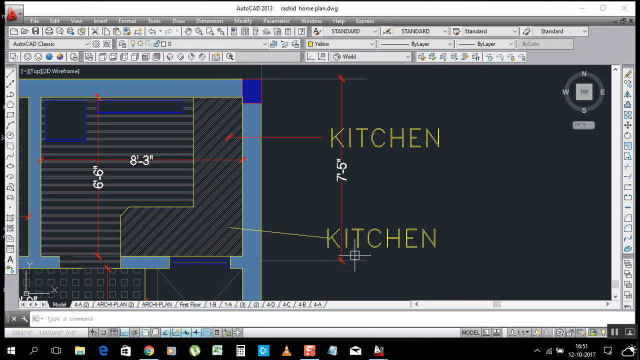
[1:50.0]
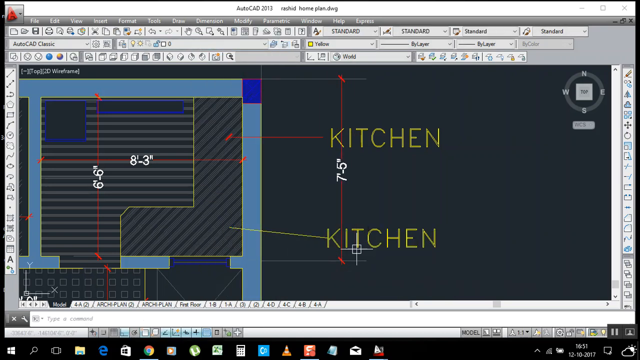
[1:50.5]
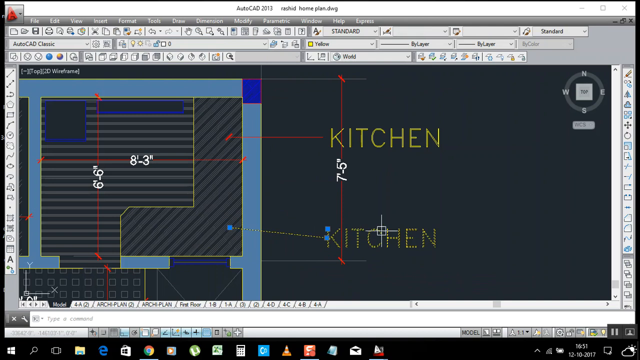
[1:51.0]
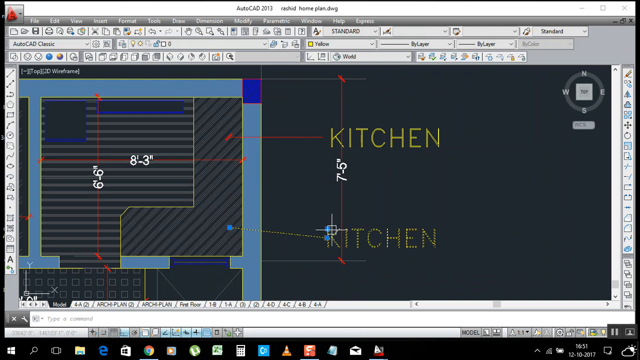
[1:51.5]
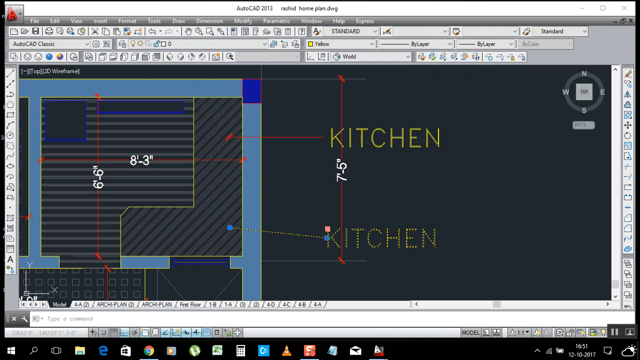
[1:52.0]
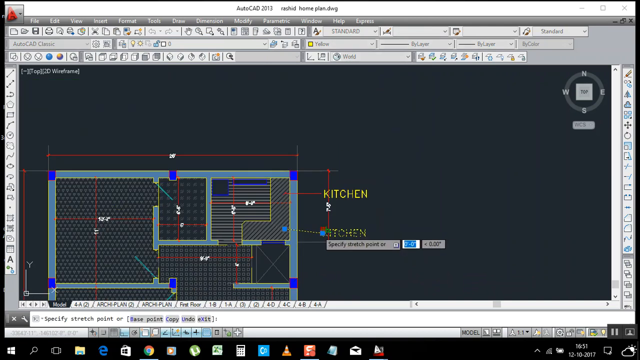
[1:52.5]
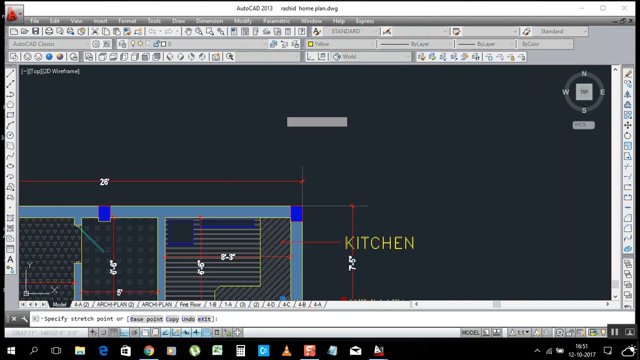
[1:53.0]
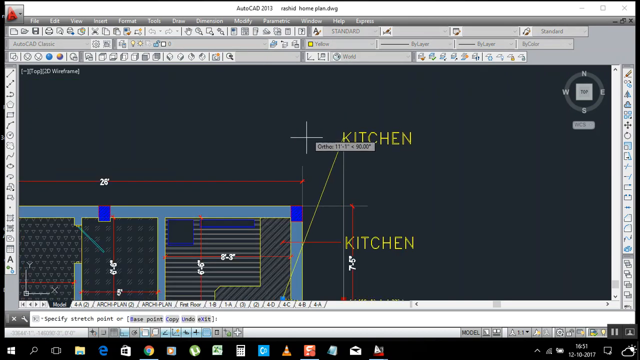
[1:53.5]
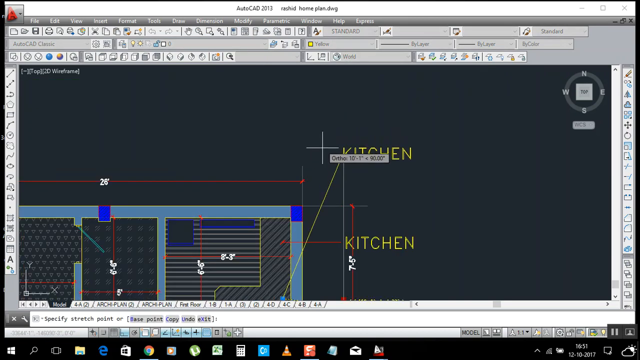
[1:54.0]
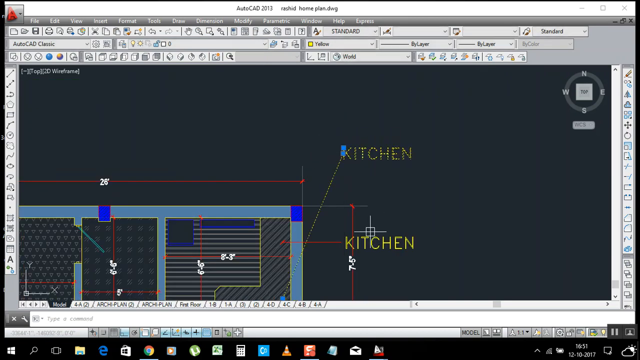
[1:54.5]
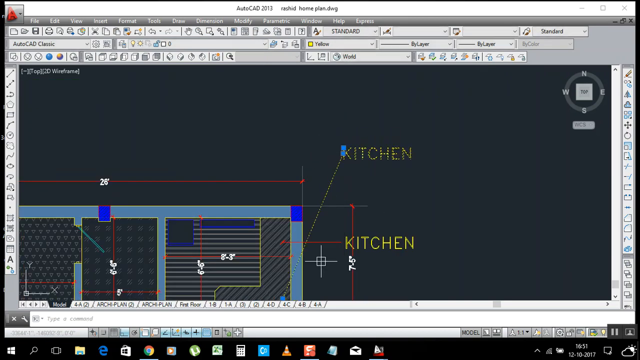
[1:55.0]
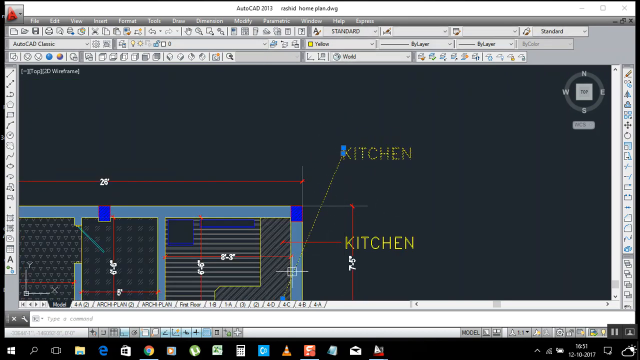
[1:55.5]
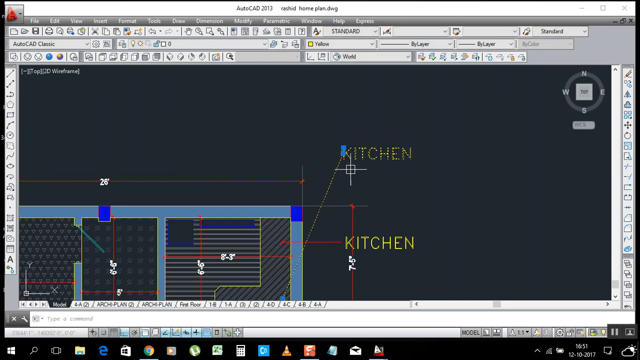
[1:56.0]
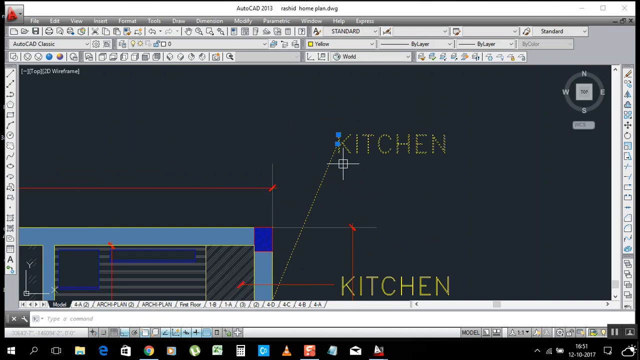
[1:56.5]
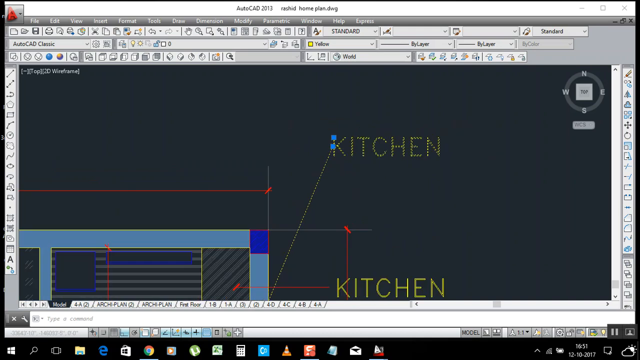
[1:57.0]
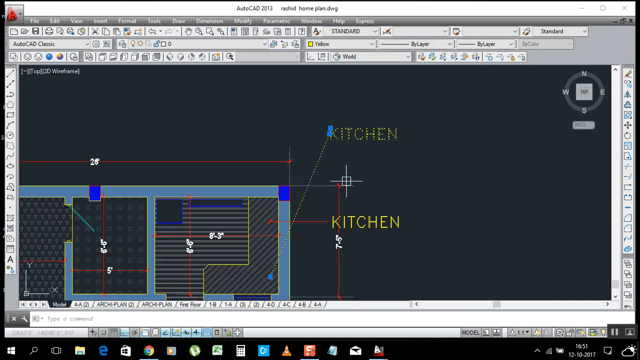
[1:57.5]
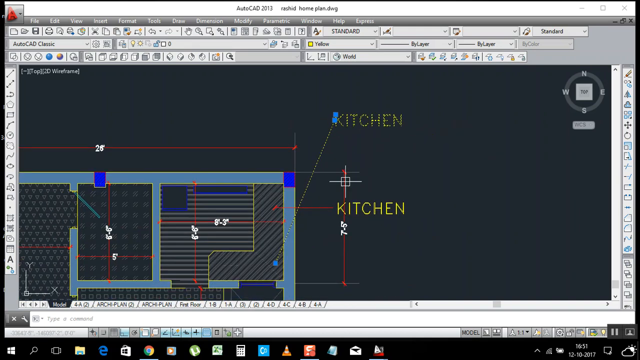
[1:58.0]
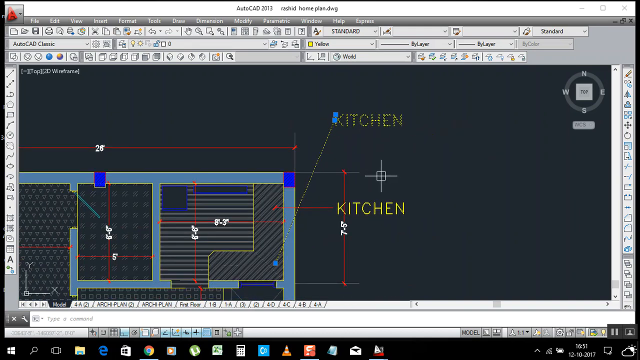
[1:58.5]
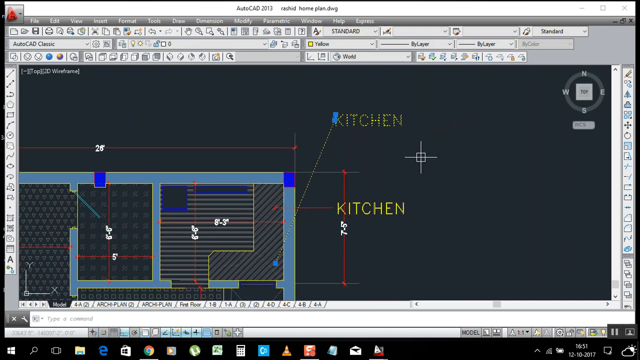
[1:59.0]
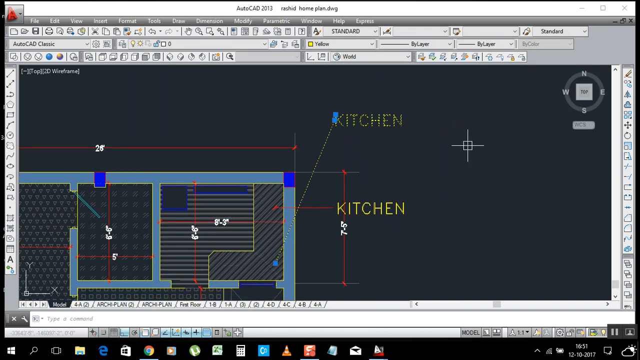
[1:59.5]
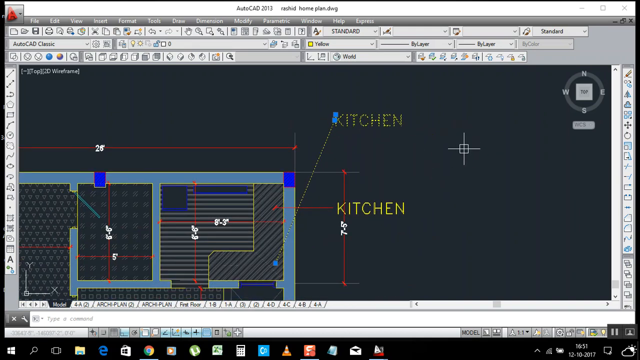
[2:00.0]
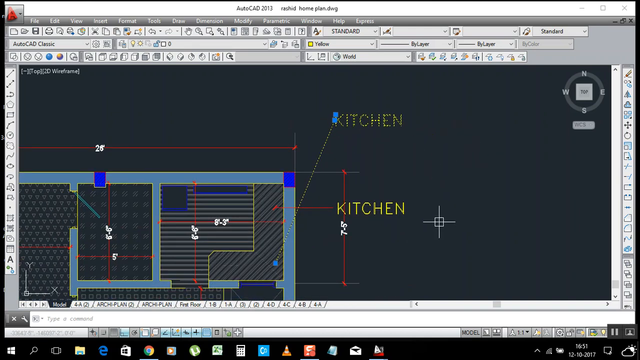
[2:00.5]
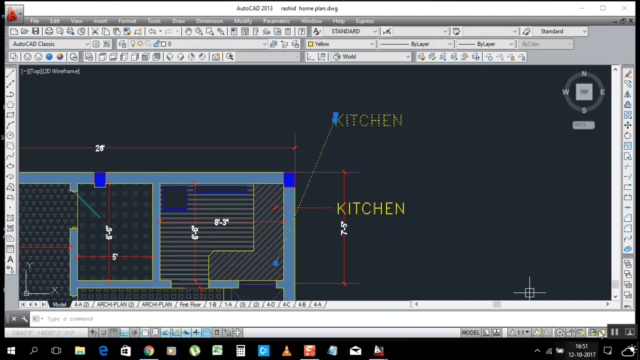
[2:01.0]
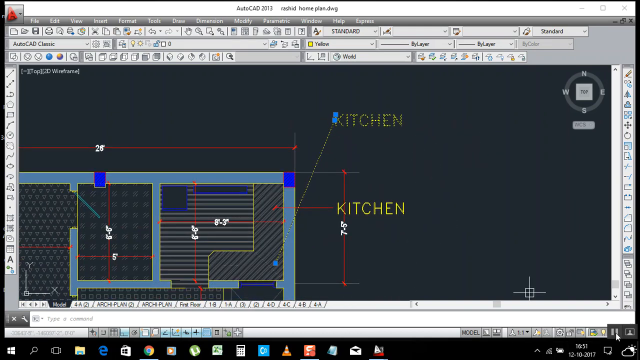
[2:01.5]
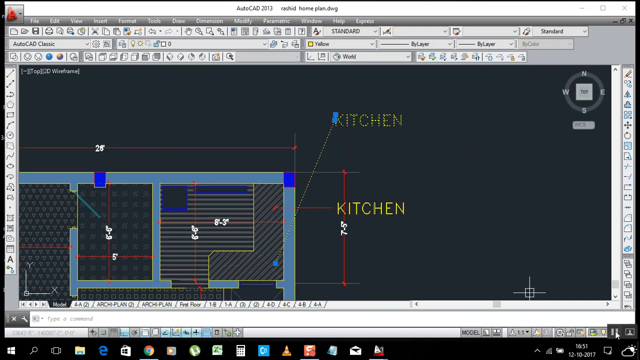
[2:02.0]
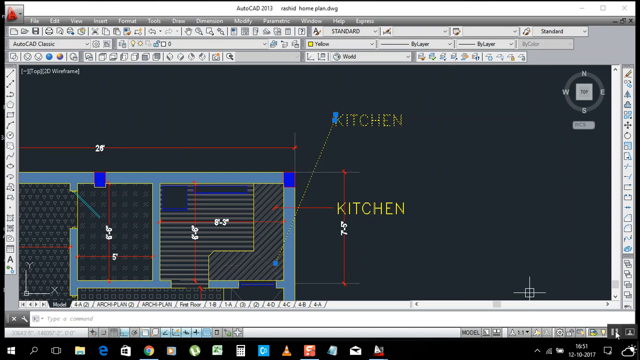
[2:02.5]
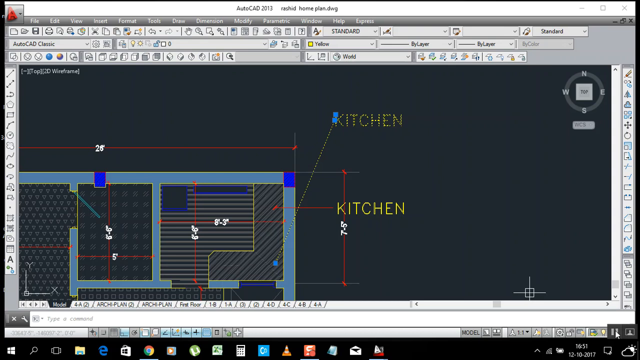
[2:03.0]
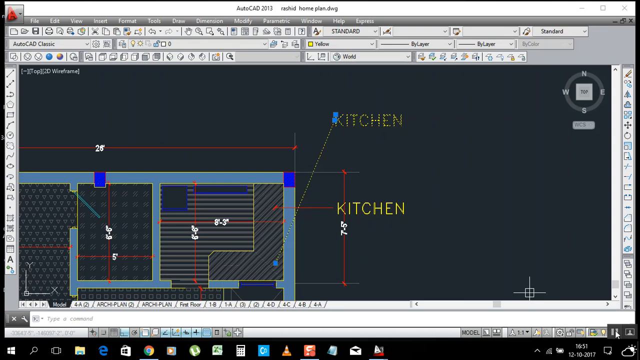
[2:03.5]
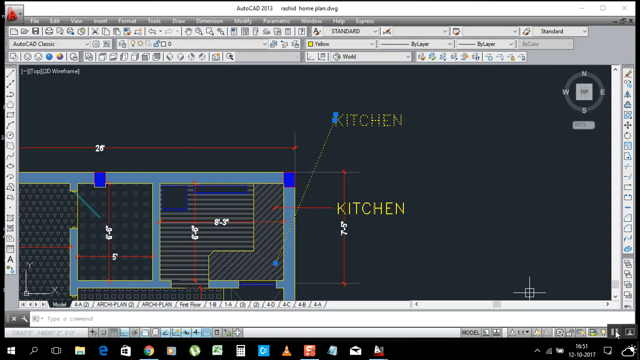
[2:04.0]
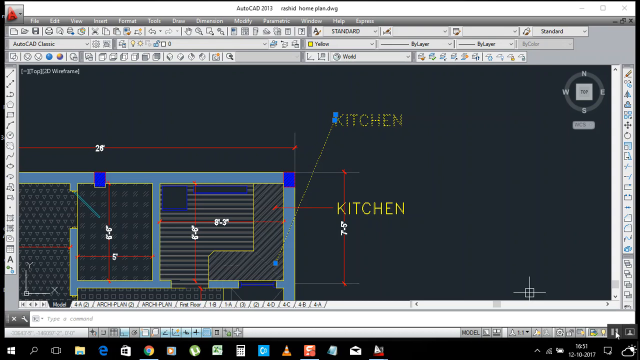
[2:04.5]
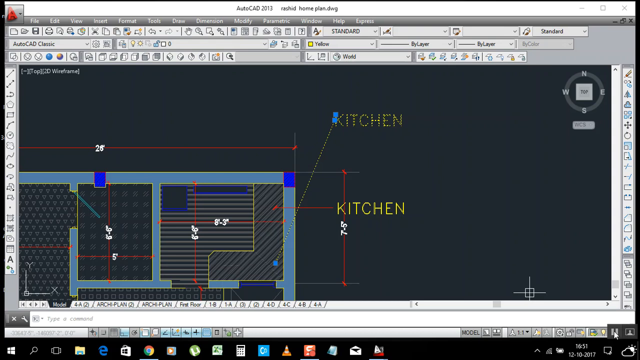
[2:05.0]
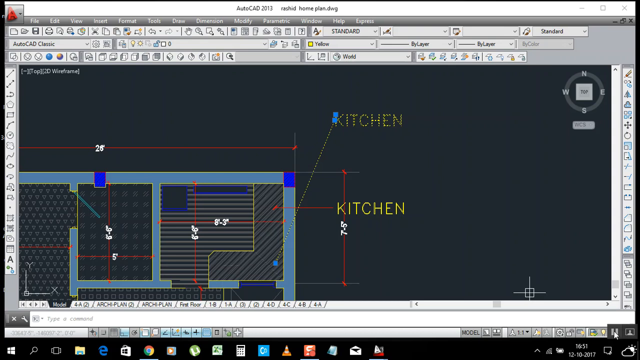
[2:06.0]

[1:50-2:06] The newly drawn vertical red line has a slash on both its bottom and top ends. The word kitchen is selected again and moved higher so it no longer overlaps the red-line measurement. The mouse pointer, still a crosshair, moves around in circles on the page. At the top of the AutoCAD program are three rows of icons, tools and menus, with the main menu above them. The open file is called "RashidHomePlan.dwg", most likely a floor plan for a house.